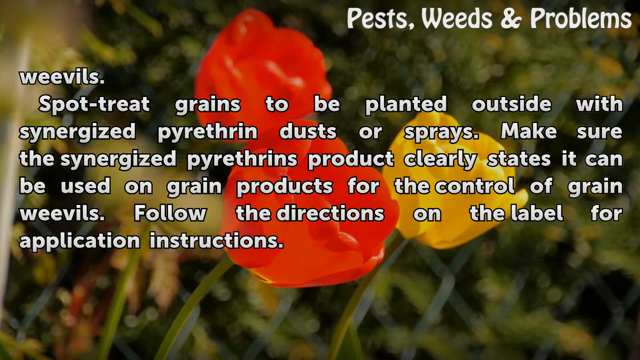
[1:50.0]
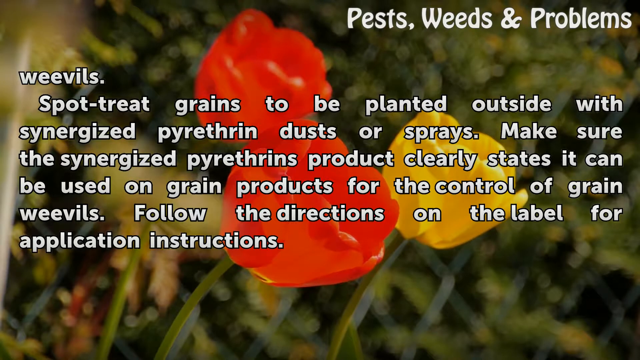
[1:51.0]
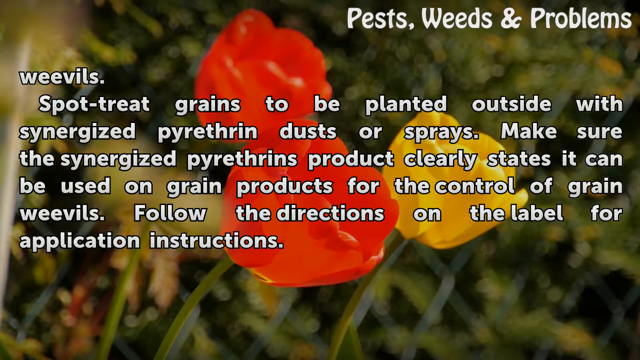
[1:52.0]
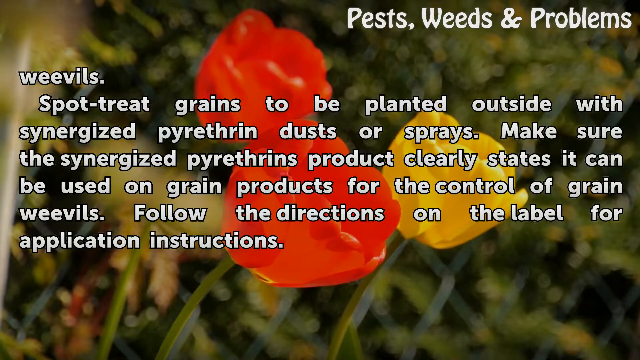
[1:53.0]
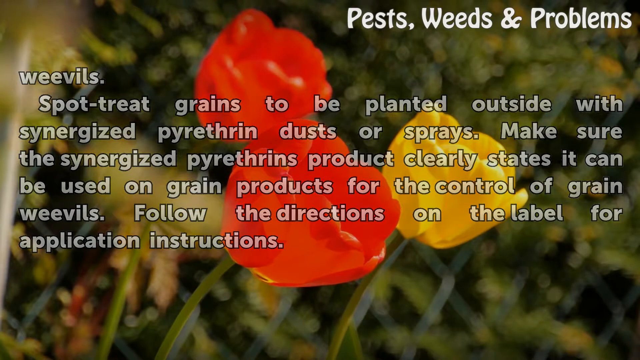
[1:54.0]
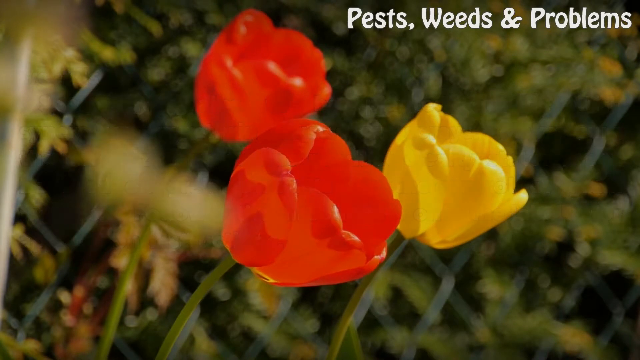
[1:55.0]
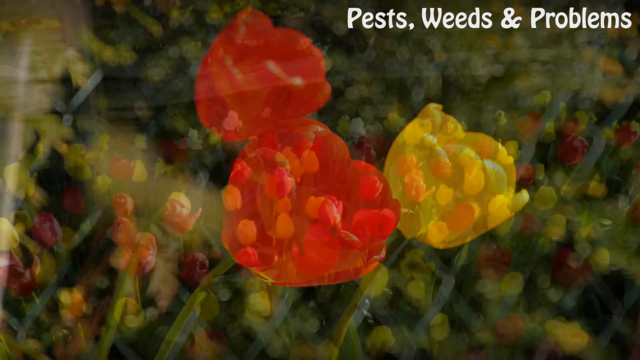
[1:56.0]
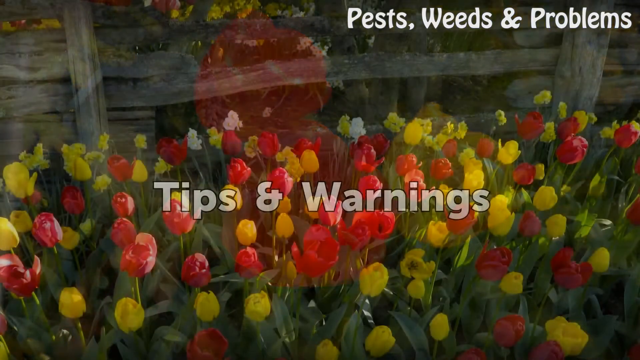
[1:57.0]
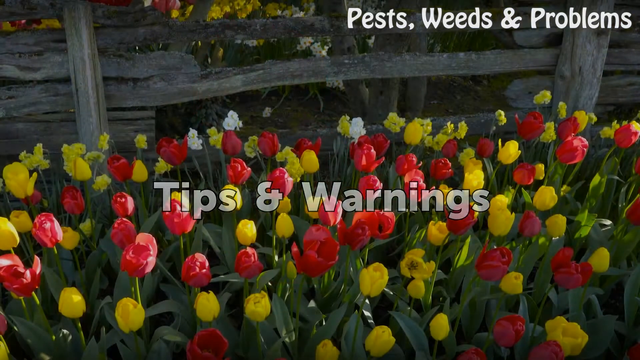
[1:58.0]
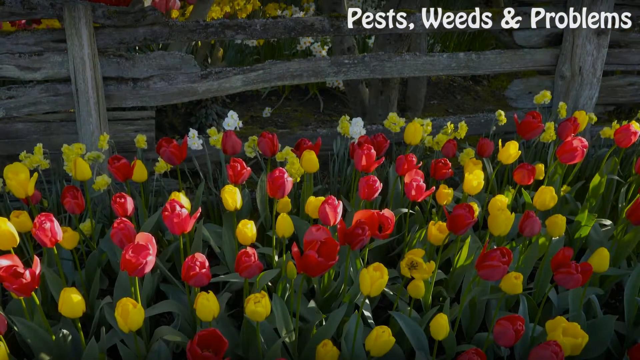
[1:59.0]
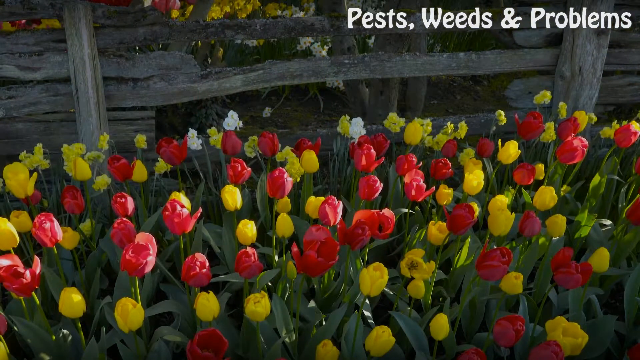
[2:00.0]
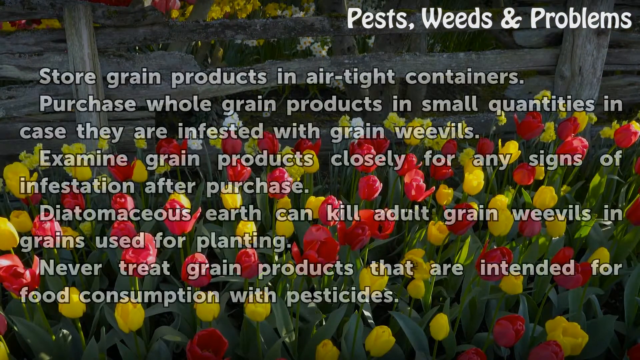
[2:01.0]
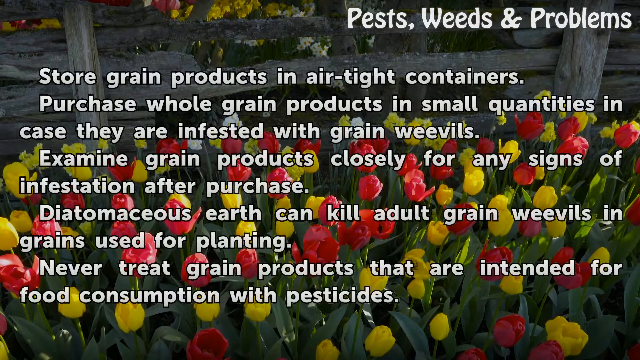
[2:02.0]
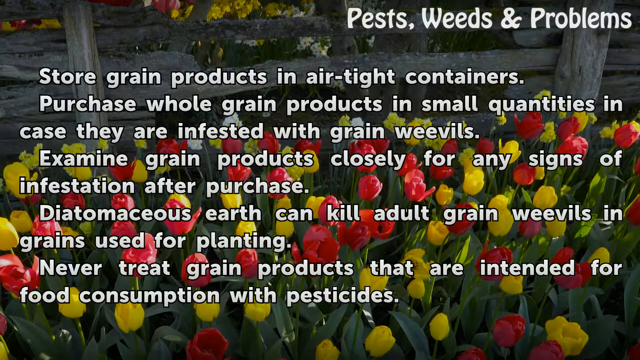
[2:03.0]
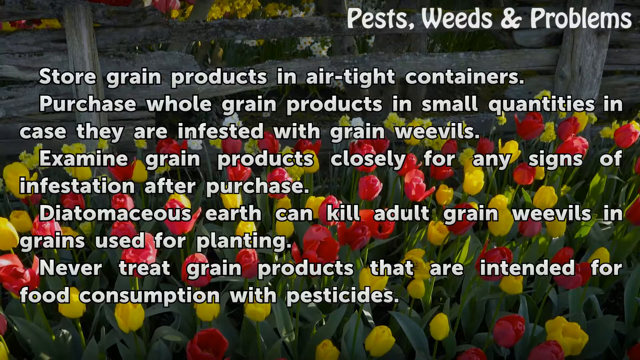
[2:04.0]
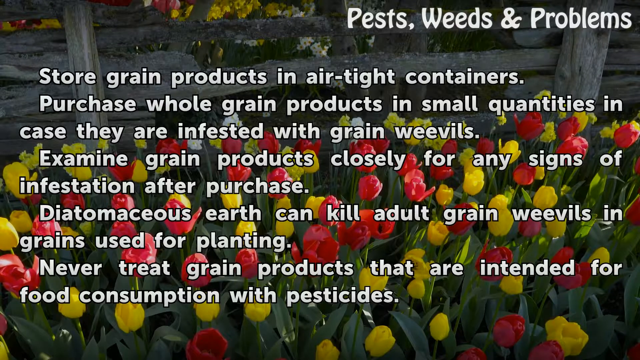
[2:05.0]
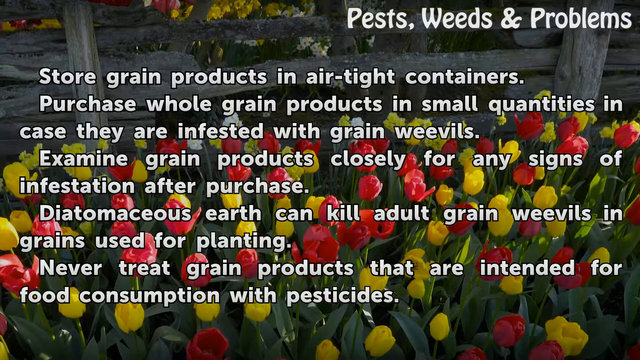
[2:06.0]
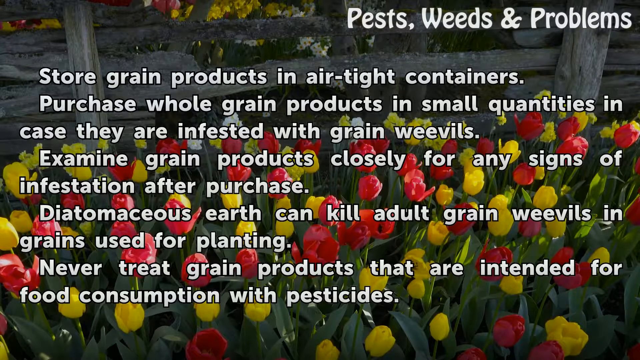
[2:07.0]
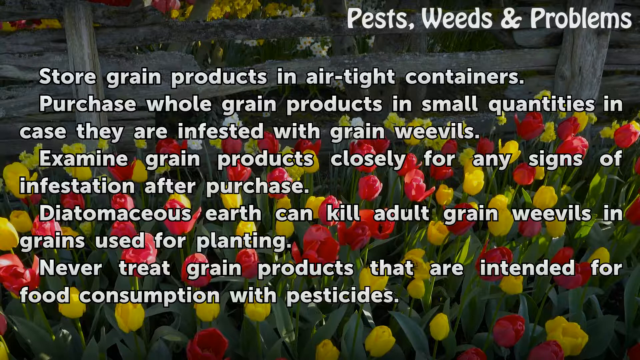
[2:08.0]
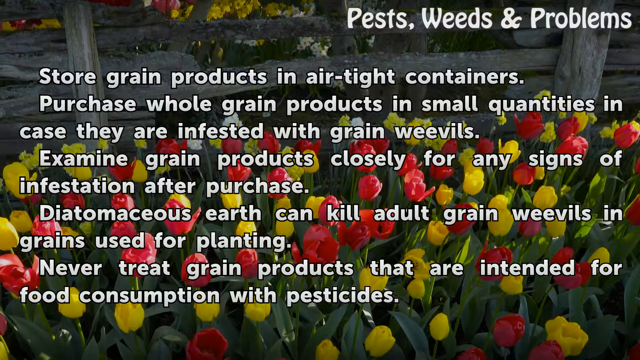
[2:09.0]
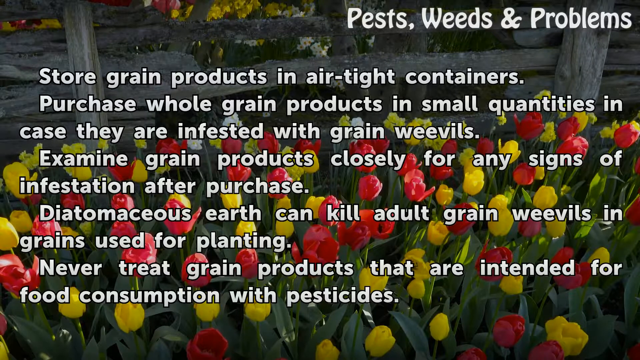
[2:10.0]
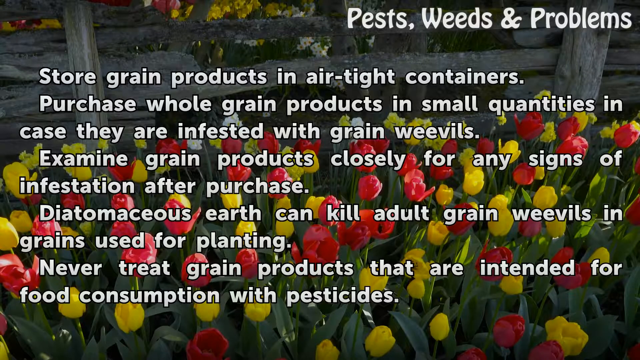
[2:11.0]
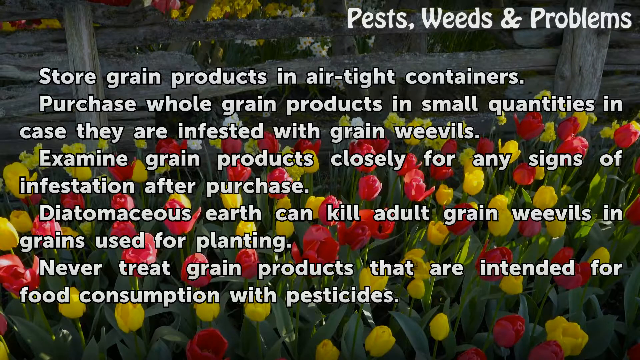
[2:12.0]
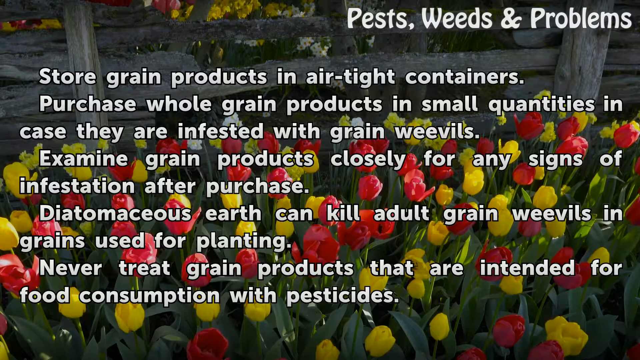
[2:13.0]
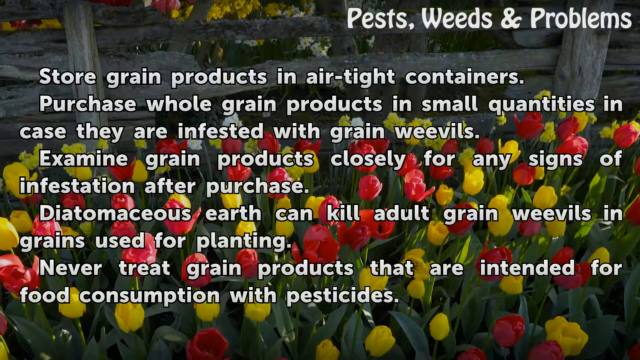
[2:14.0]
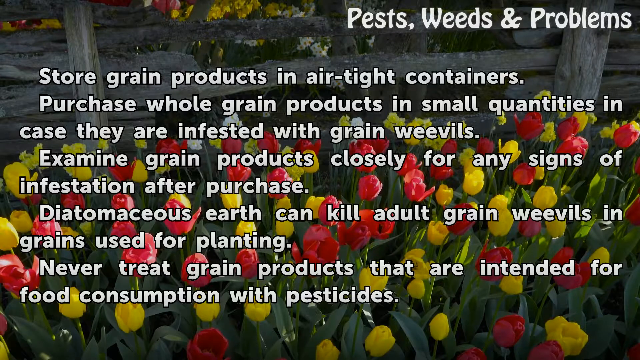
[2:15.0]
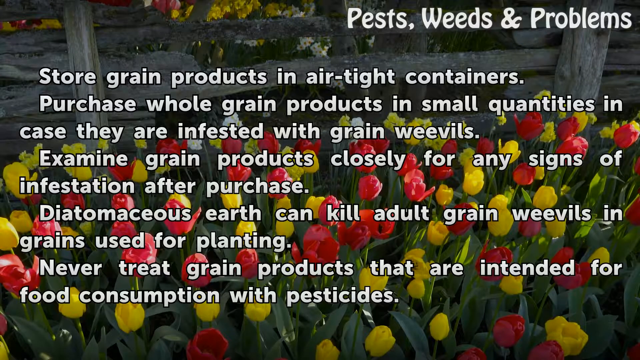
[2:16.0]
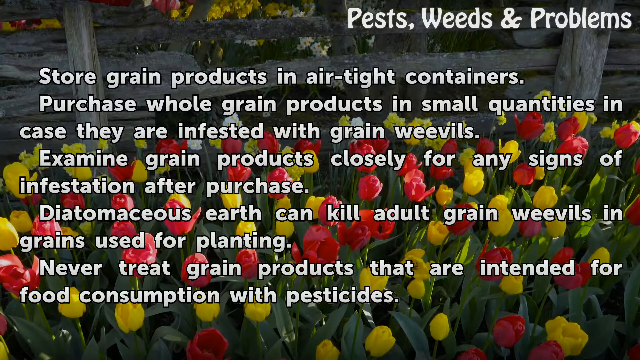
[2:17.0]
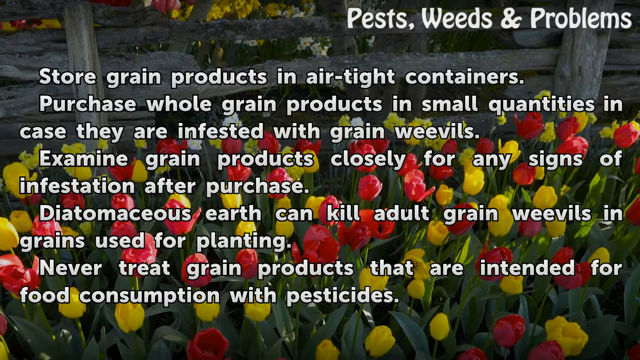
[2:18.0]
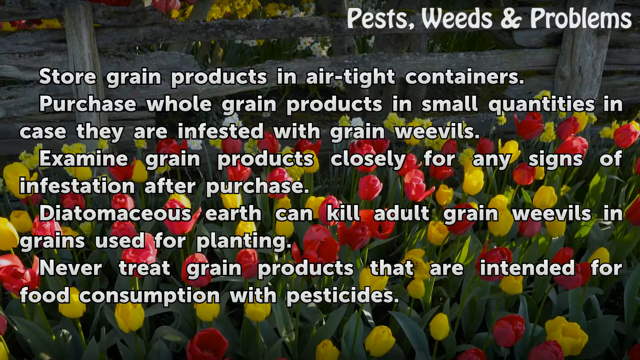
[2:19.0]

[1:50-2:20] A message on the screen says to "spot treat grain to be planted outside with synergized pyrethrin dust or spray", to "make sure the synergized pyrethrin product clearly states this can be used on grain products for the control of grain weevils", and "be sure to follow the directions". In the background, a whole bed of red and yellow tulips sways in the breeze. The message then changes to: "store grain products in airtight containers and purchase whole grain products in small quantities in case they are infested with grain weevils. Examine grain products closely for any signs of infestation after purchase", followed by text stating that diatomaceous earth can kill adult grain weevils in grain used for planting, and to never treat grain products intended for food consumption with pesticides. The yellow and red flowers in the background move slowly in the breeze throughout.